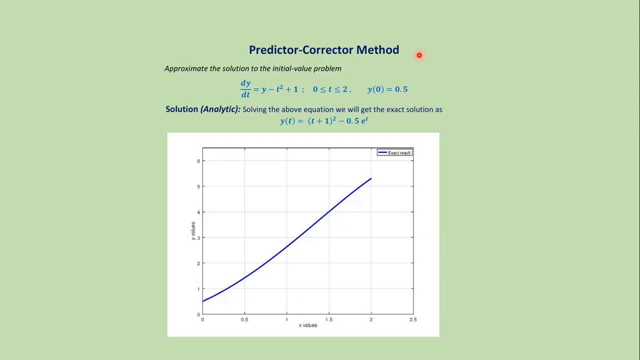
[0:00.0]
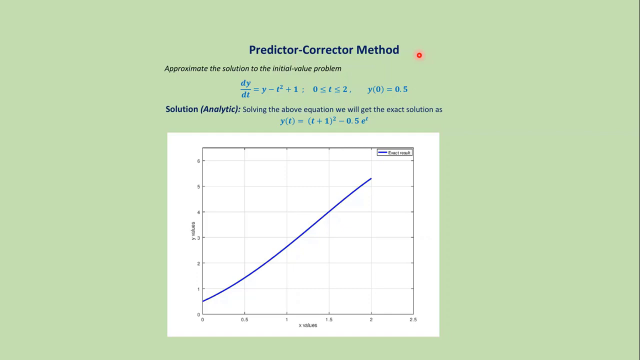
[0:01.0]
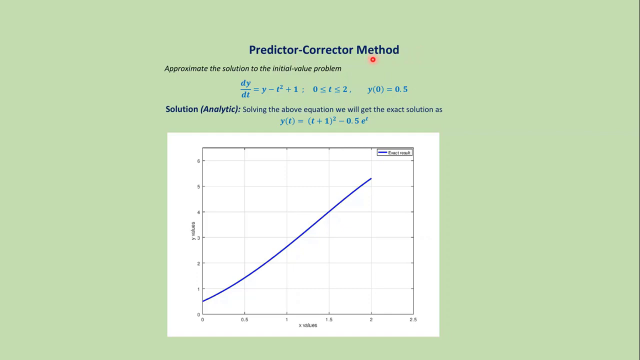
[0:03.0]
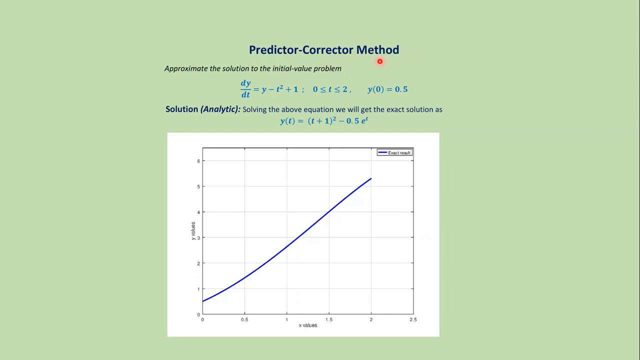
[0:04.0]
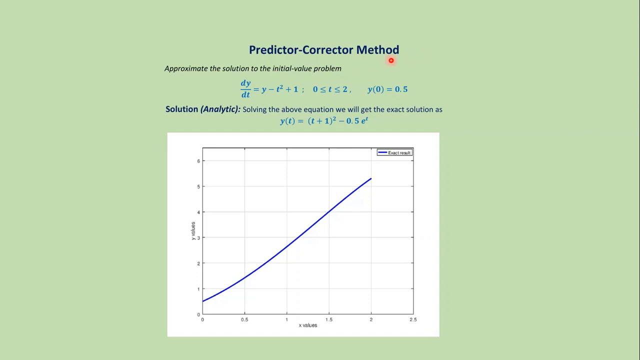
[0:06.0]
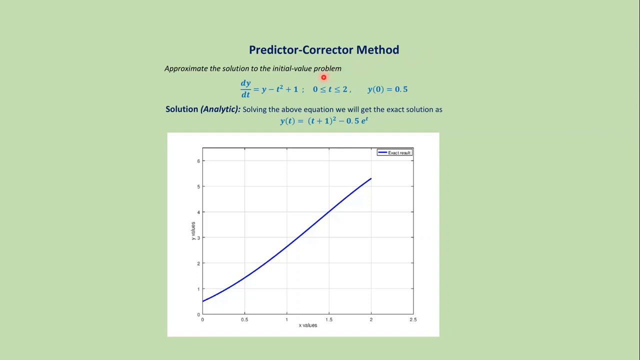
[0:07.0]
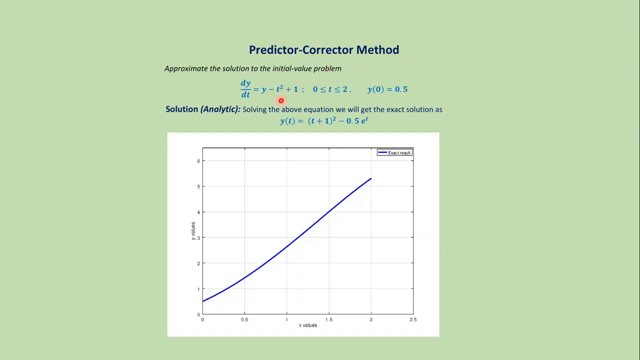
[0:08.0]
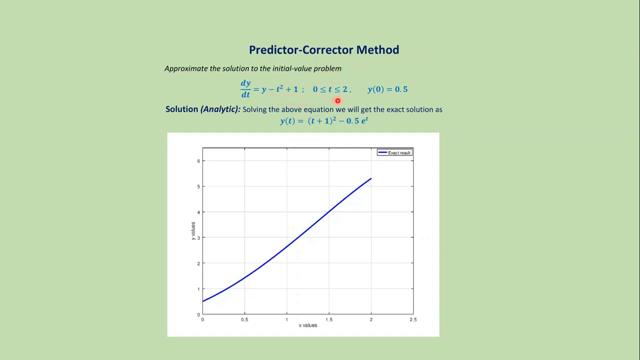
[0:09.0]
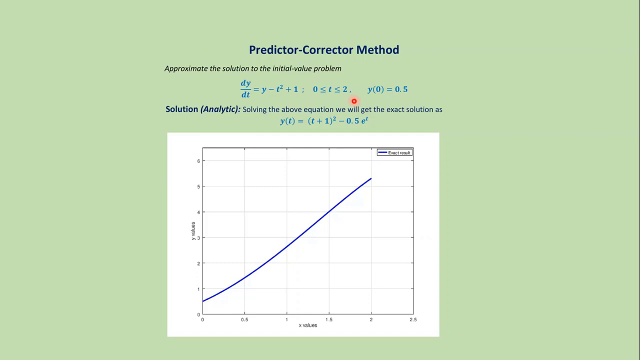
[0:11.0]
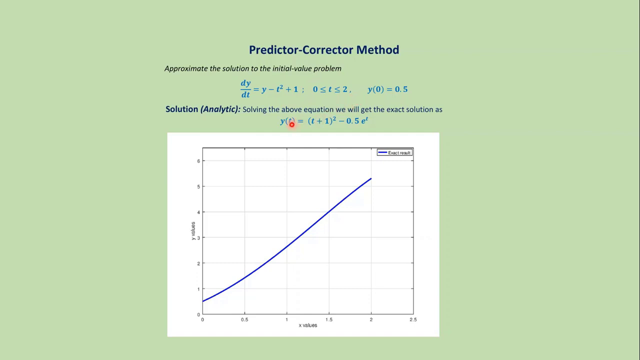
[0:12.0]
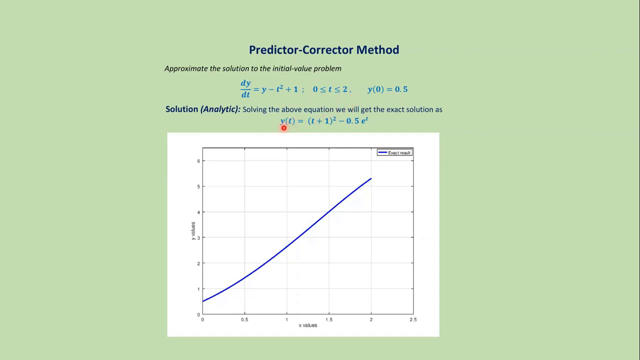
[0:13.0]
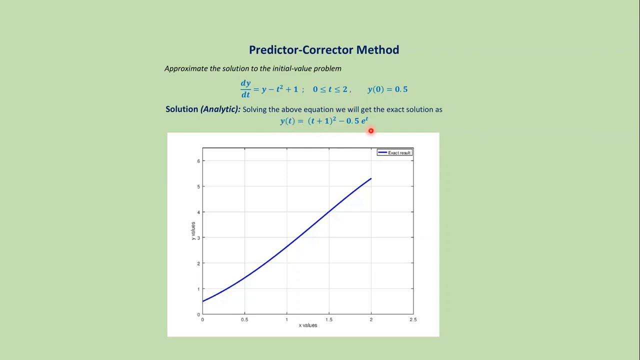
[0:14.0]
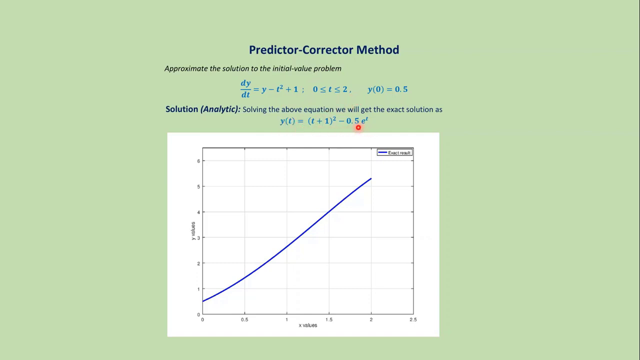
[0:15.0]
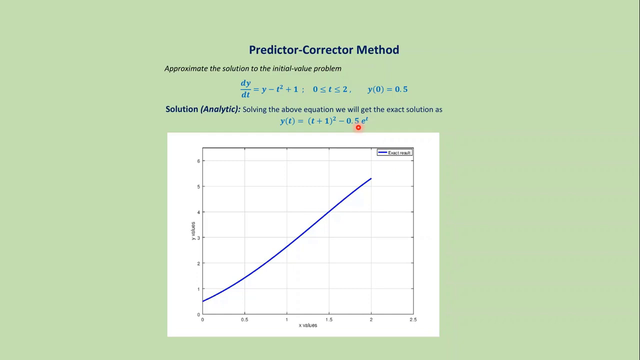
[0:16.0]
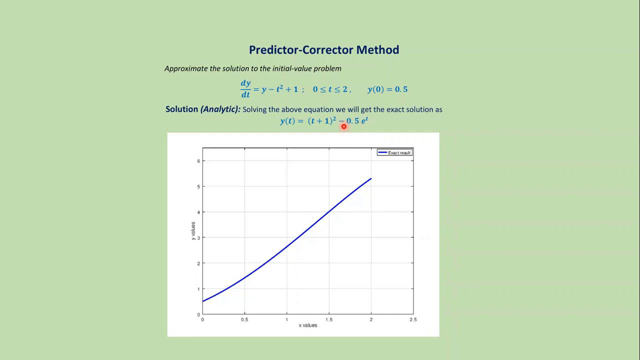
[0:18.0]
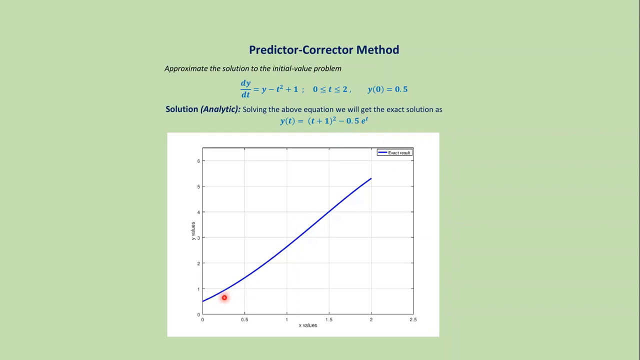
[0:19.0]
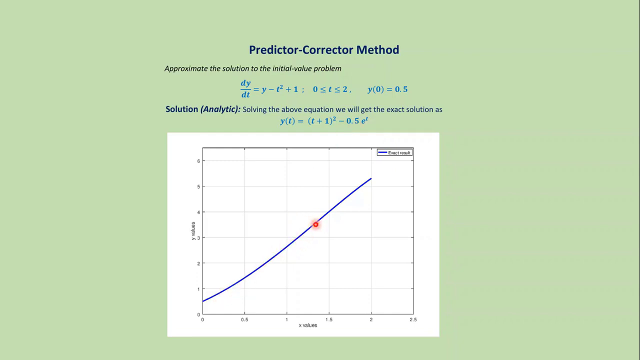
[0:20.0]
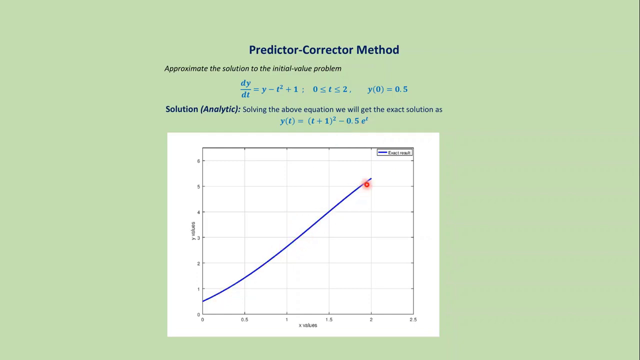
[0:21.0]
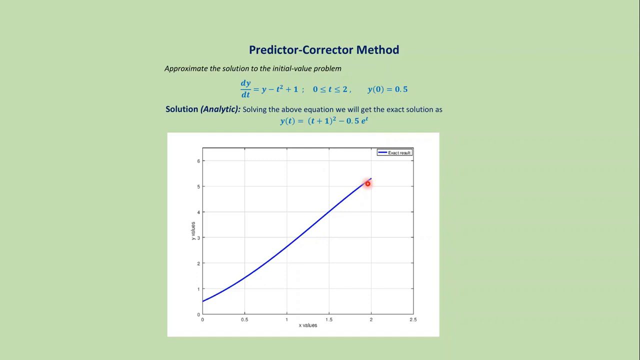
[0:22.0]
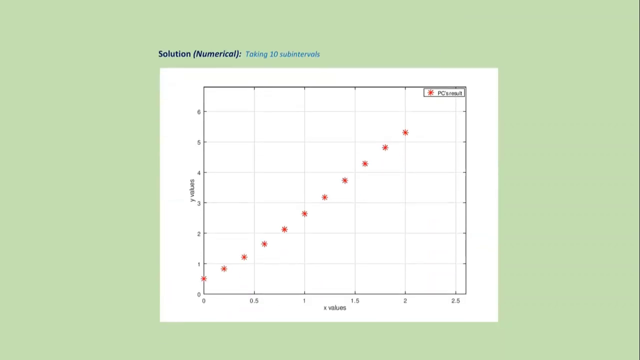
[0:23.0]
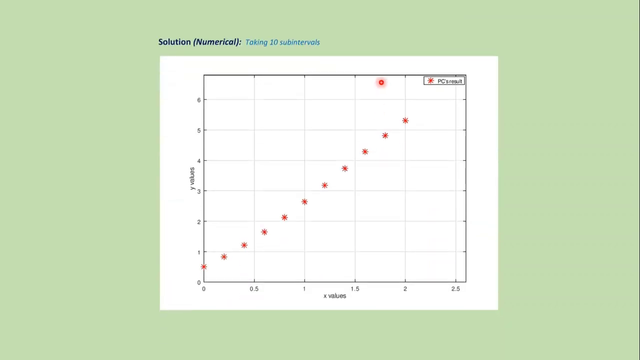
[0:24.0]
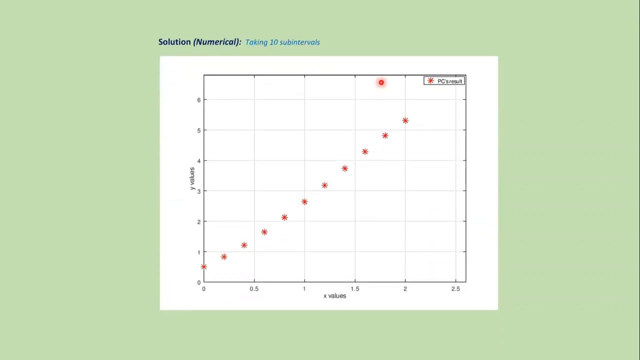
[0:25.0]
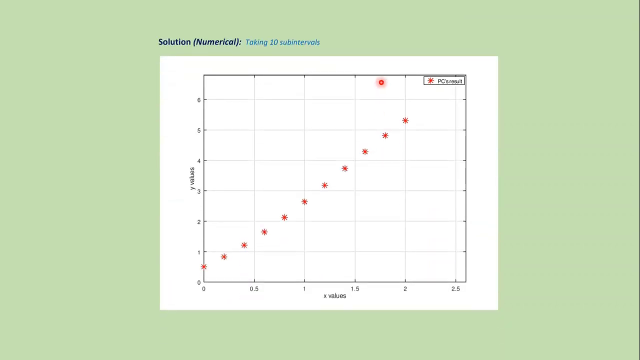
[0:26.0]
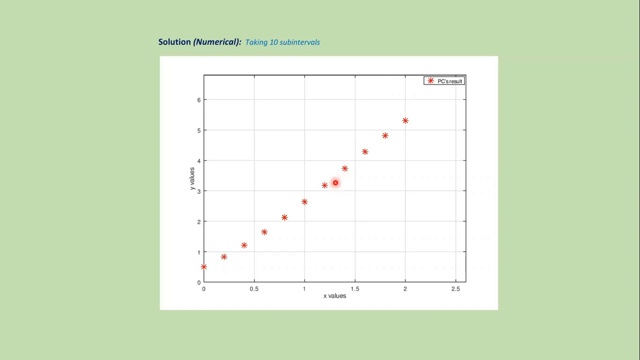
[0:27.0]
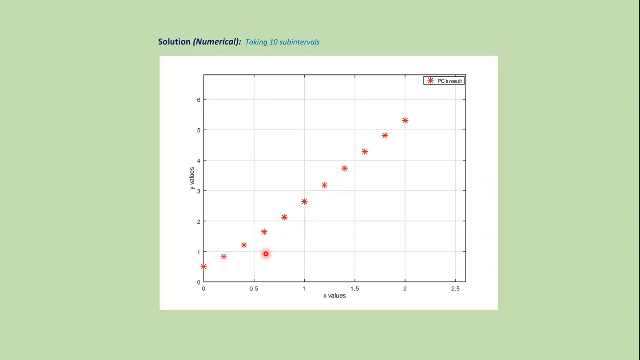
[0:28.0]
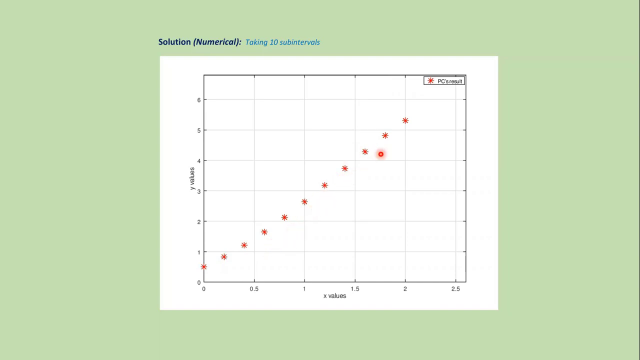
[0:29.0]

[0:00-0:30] This educational-style math video shows a page with the text "predictor-corrector method" and "approximate the solution to the initial value problem." A math problem is underneath that text, and below it the page says "solution, analytic, solving the above equation. We will get the exact solution as," followed by a solution. A big red laser pointer moves around the page, mainly highlighting the math problems. In the lower part of the page there is a chart. The laser pointer then goes down to the next page, where the chart is no longer a line but a bunch of red dots running from the bottom left of the chart up to the upper right central part of the chart.